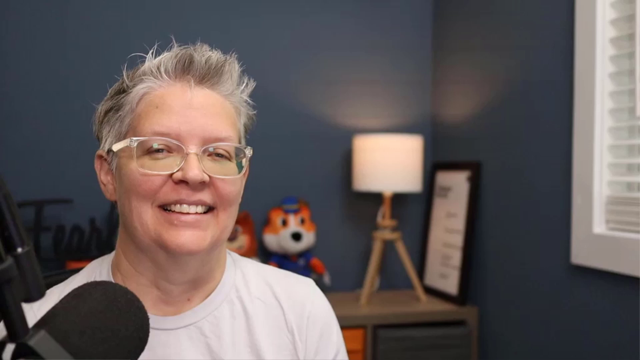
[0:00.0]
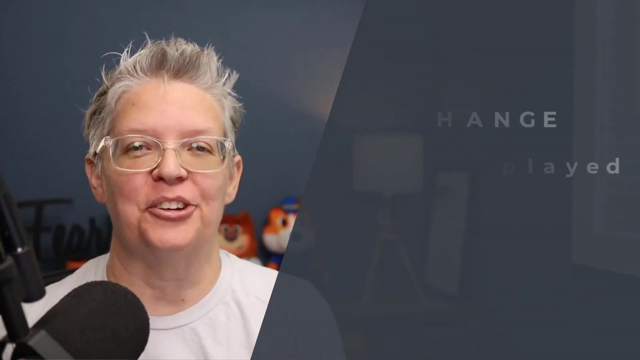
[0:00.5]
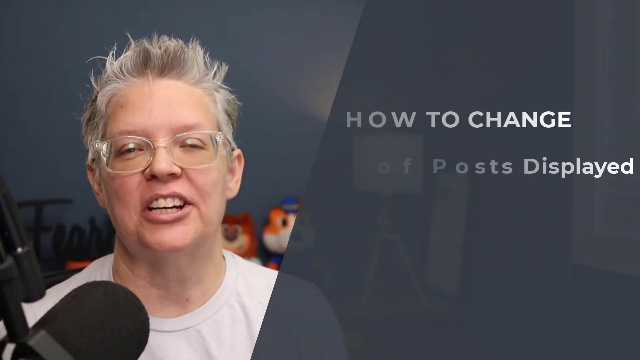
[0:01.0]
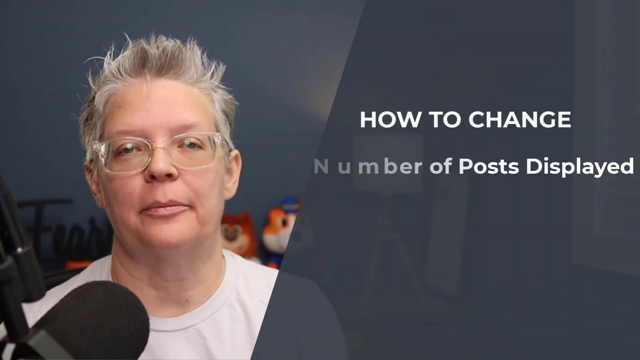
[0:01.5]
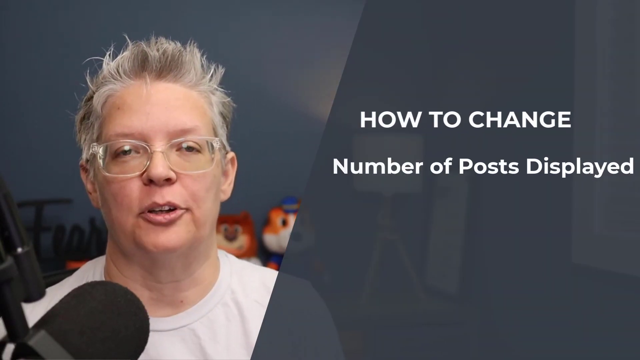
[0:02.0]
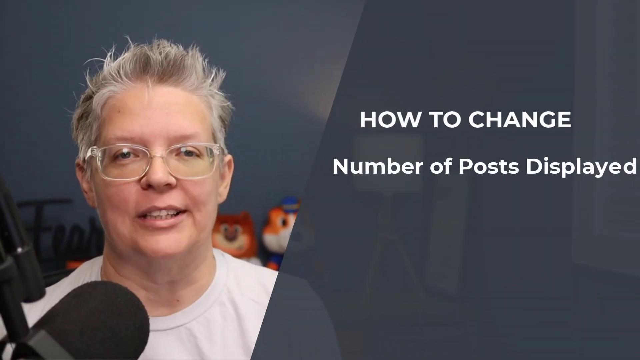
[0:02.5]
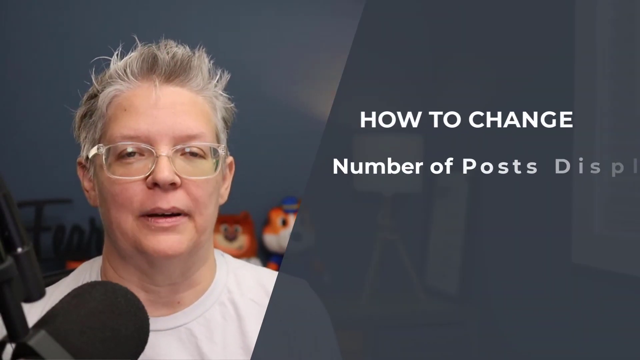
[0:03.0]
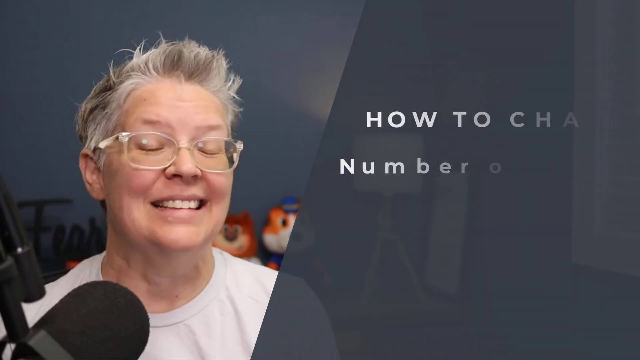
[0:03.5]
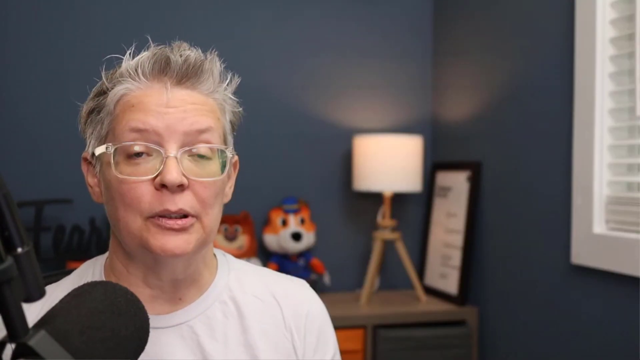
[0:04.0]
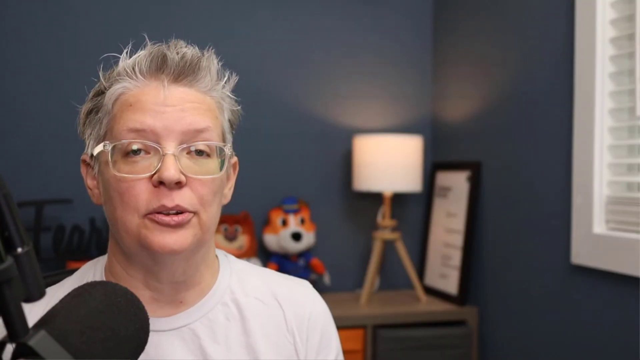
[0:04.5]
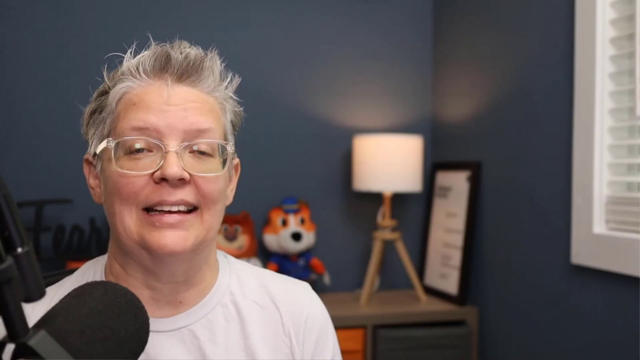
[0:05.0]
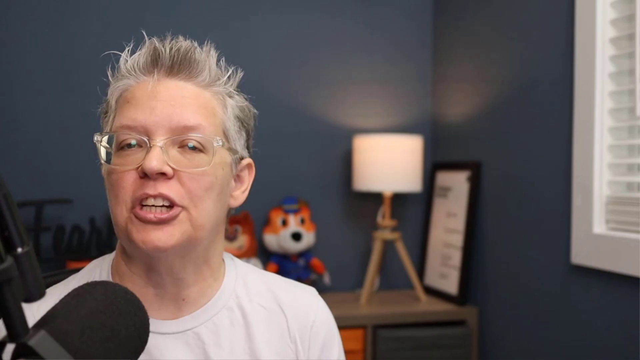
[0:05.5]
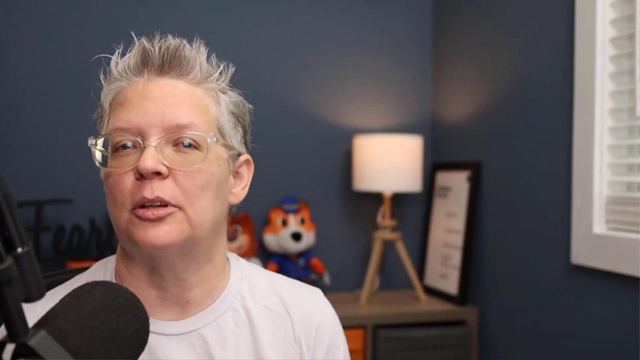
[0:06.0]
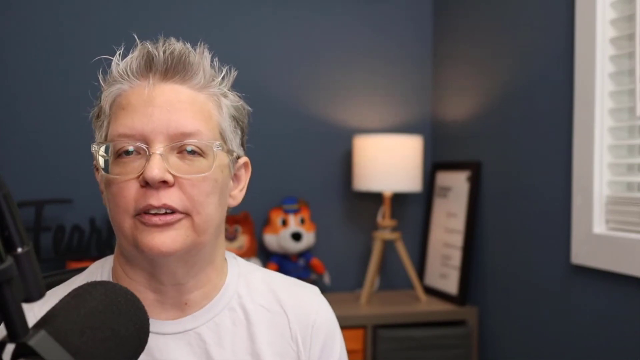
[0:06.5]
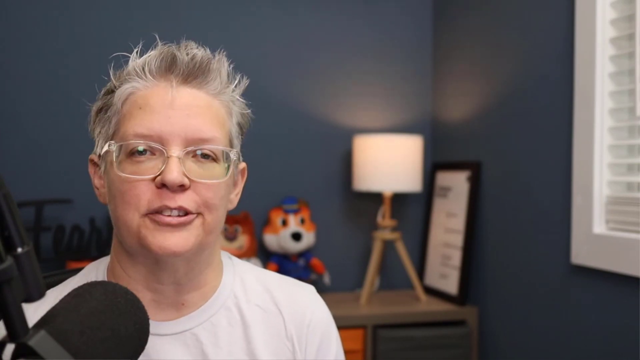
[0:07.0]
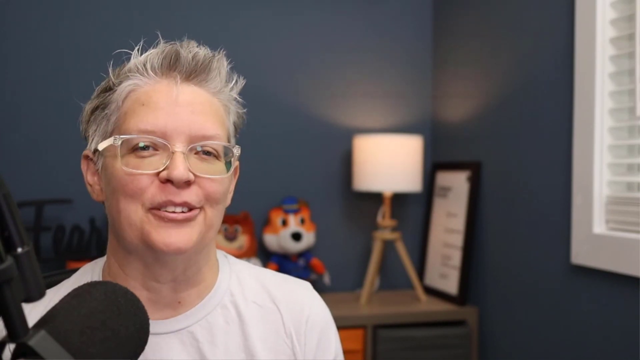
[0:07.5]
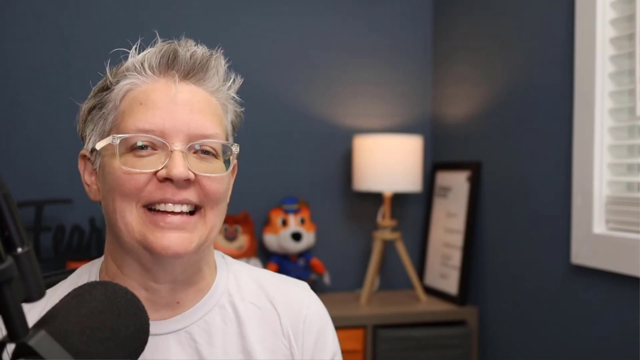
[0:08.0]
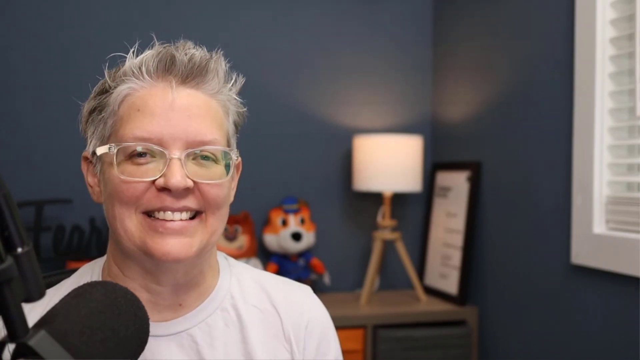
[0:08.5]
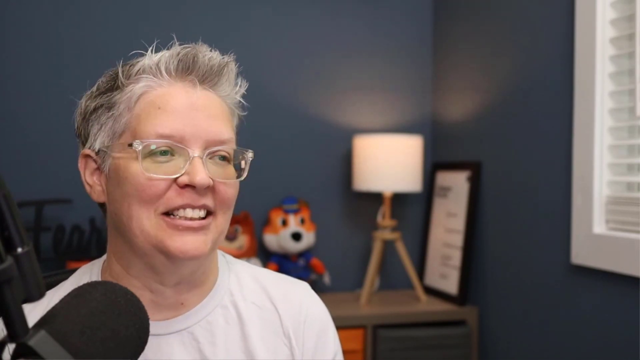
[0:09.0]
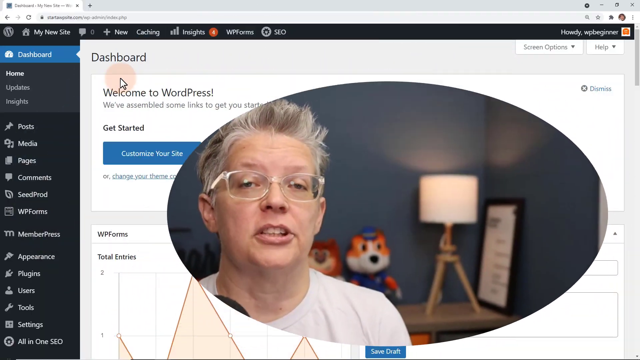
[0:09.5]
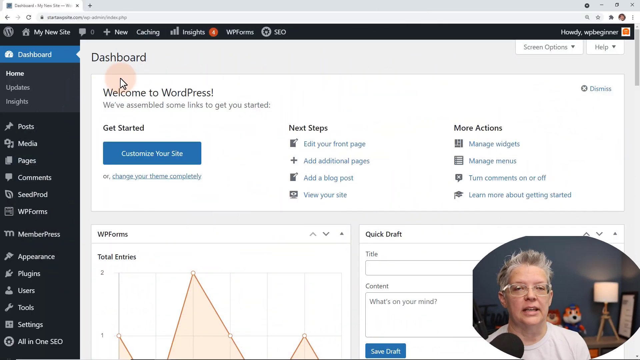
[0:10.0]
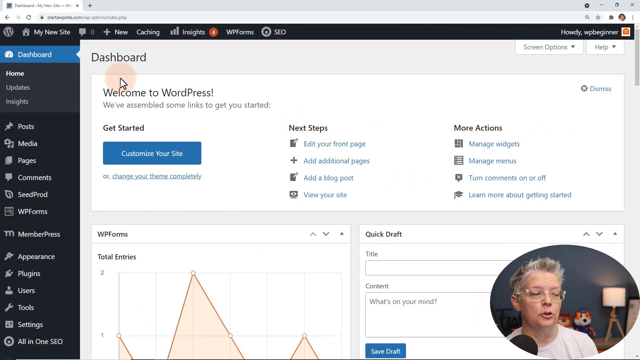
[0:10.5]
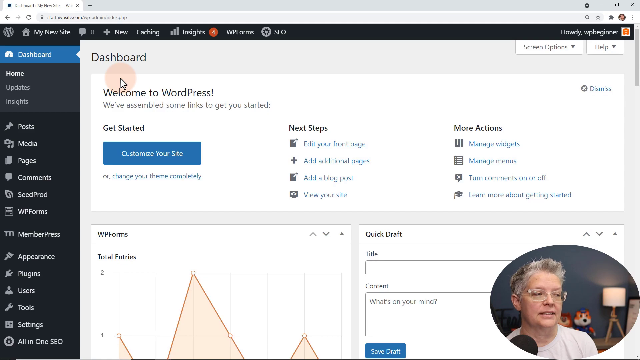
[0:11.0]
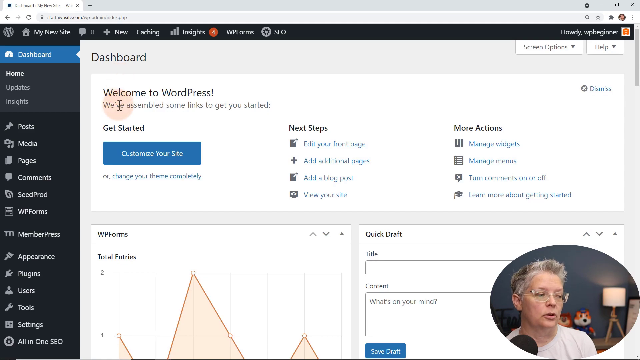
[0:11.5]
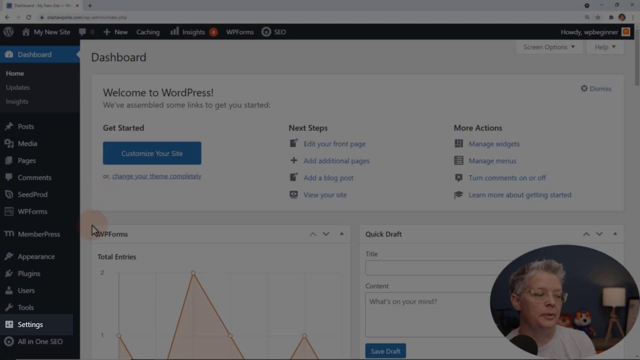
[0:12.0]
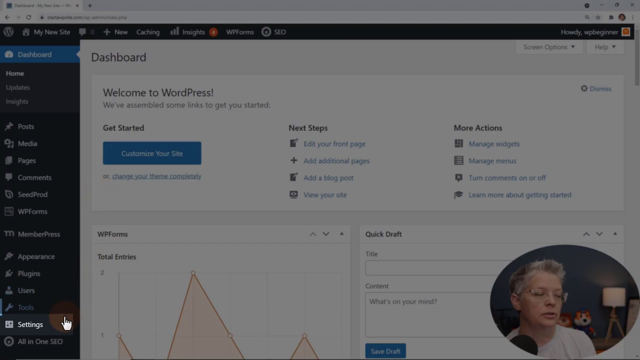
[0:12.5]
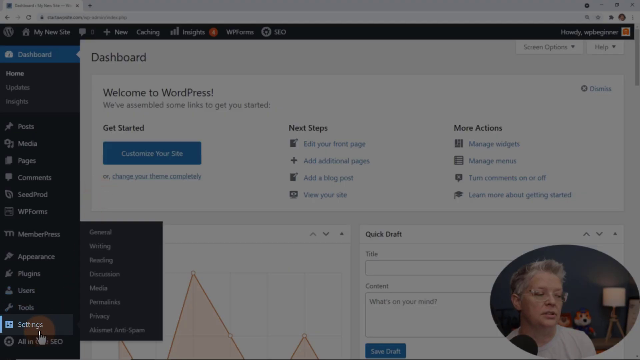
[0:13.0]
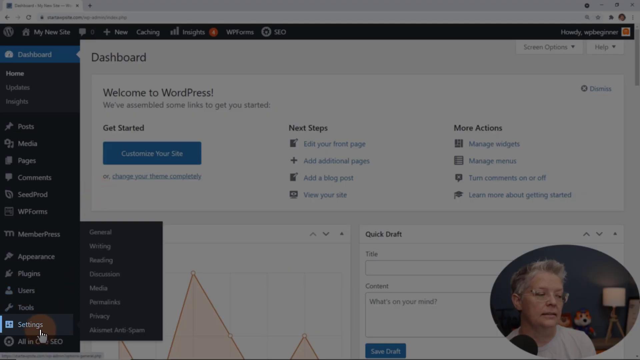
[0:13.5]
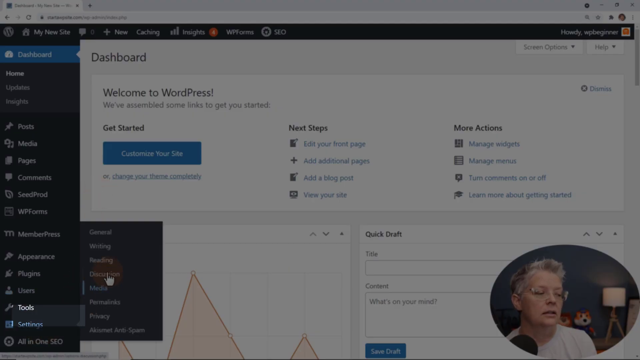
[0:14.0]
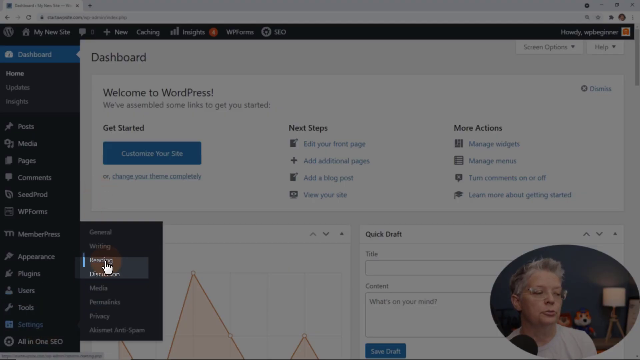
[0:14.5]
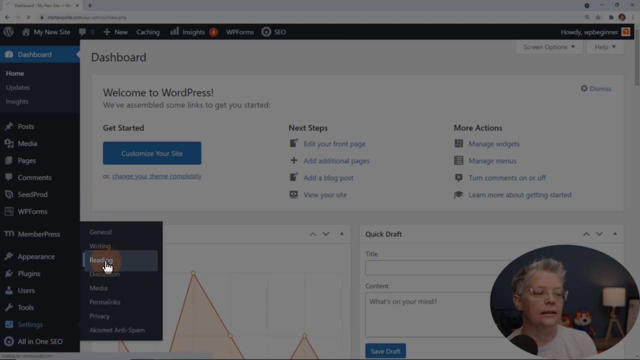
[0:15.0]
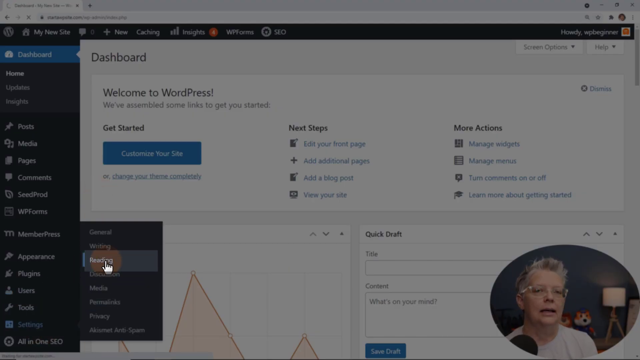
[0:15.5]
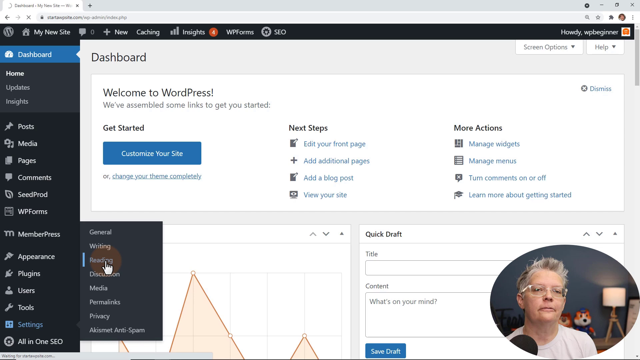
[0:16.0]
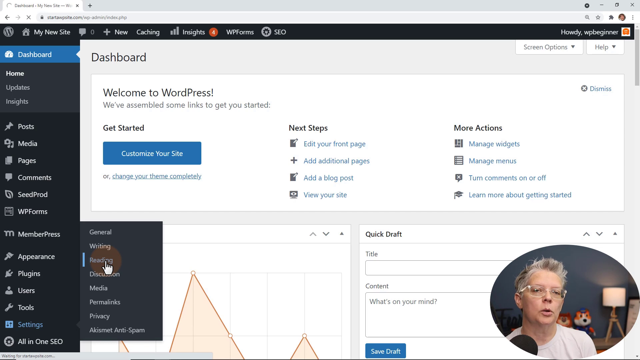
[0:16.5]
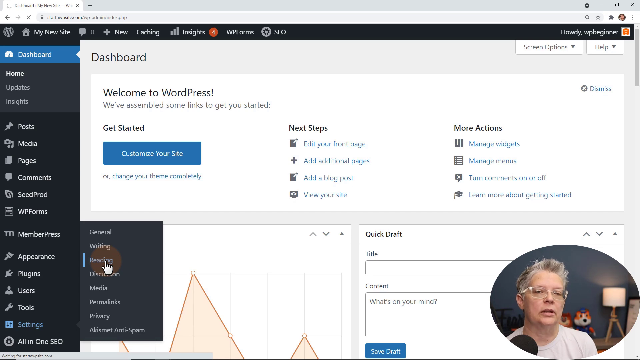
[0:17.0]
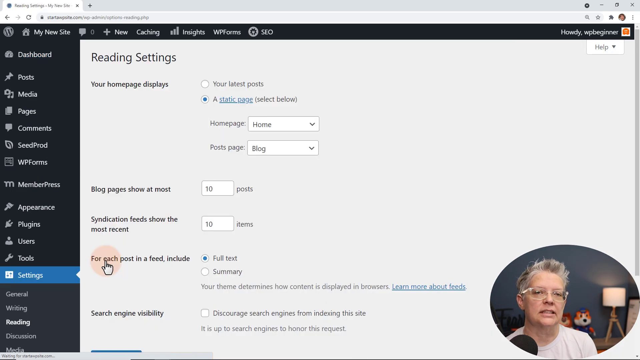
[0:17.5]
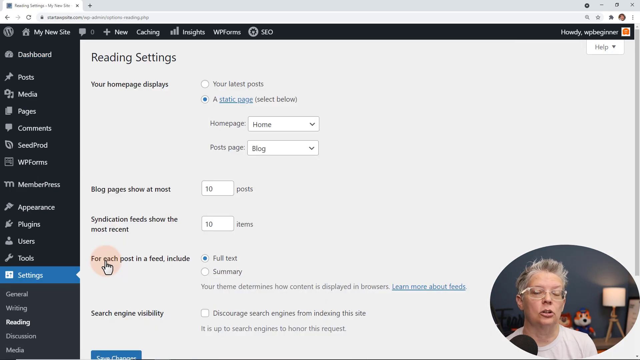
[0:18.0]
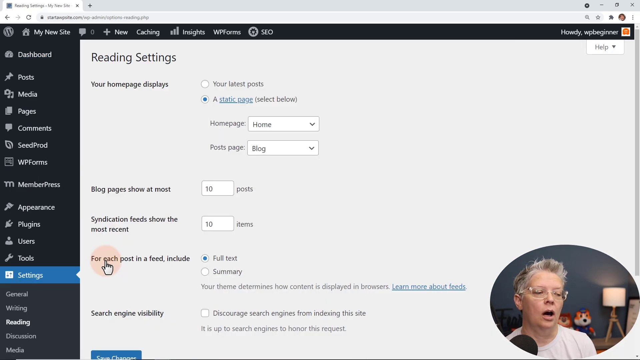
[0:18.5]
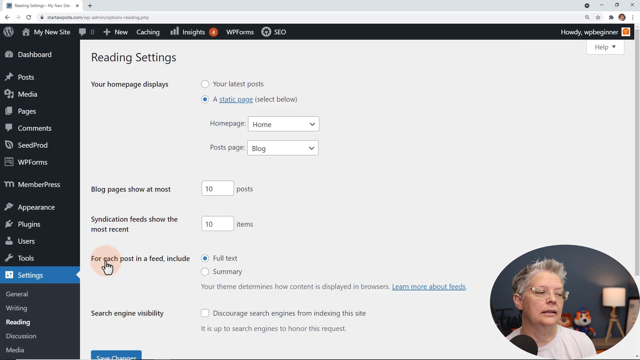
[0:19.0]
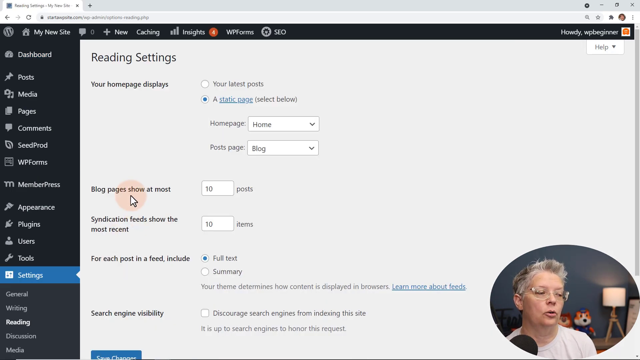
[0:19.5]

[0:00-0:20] A middle-aged woman, probably around 35 to 45, wearing glasses and a white shirt, is in a room with some kind of plushies, a lamp and a picture behind her. Text appears on the screen saying "how to change numbers on the display." The view then zooms out and opens a webpage in a web browser, showing a dashboard that says "Welcome to the Workplace." The woman remains visible in a bubble in the bottom right-hand side of the screen as she starts clicking around the WordPress website, showing information and clicking on settings. Her face is visible throughout the video.